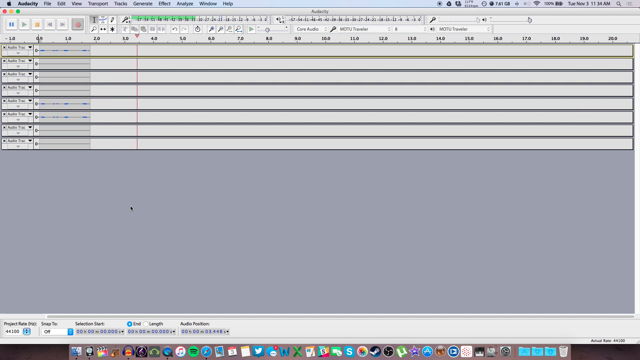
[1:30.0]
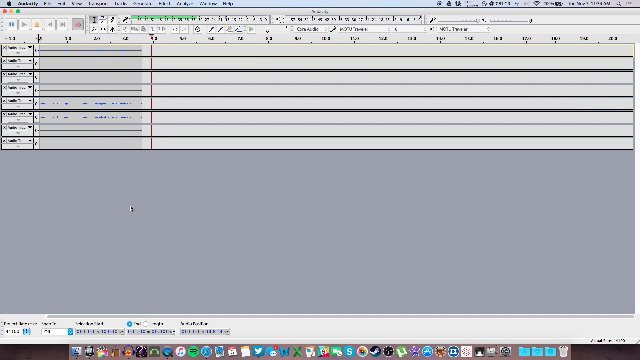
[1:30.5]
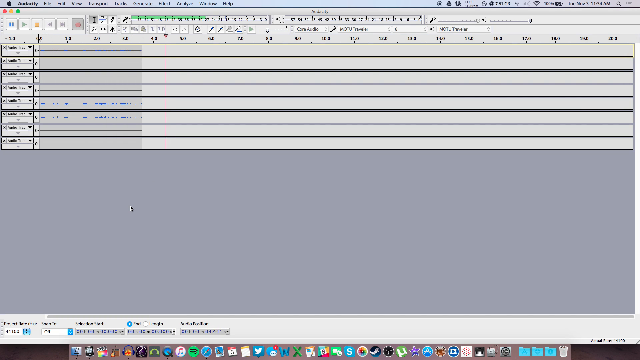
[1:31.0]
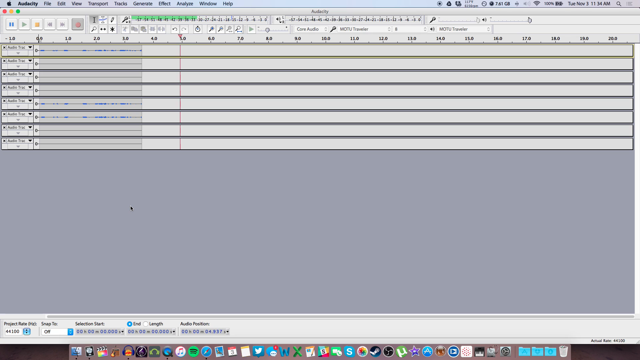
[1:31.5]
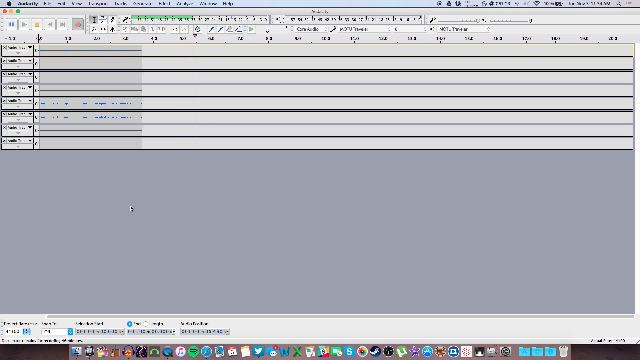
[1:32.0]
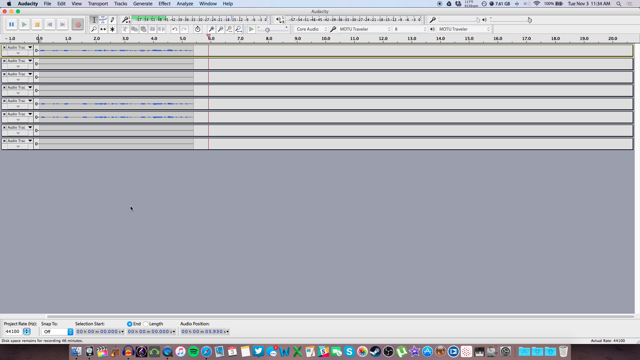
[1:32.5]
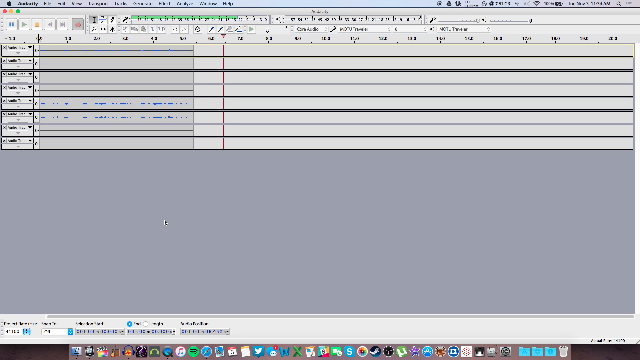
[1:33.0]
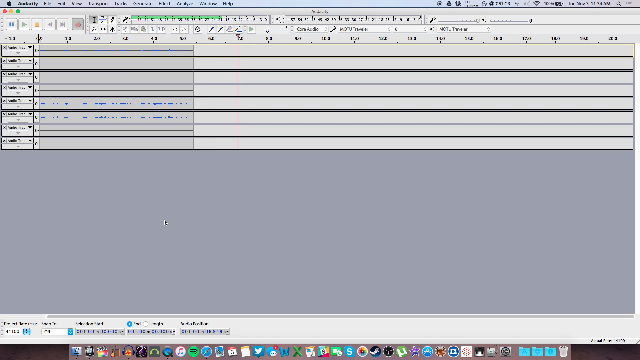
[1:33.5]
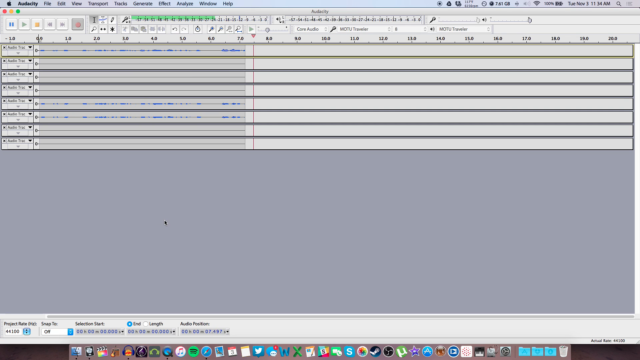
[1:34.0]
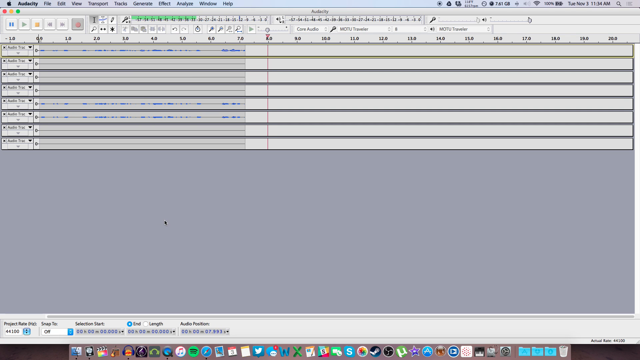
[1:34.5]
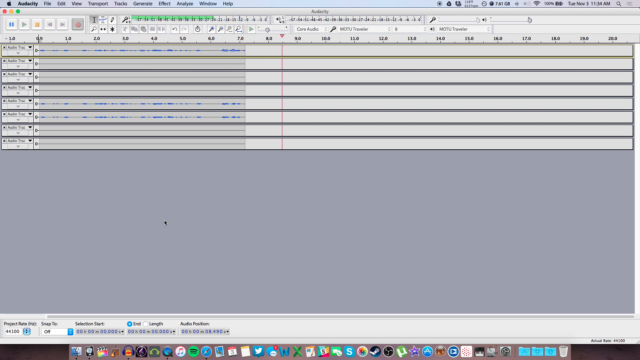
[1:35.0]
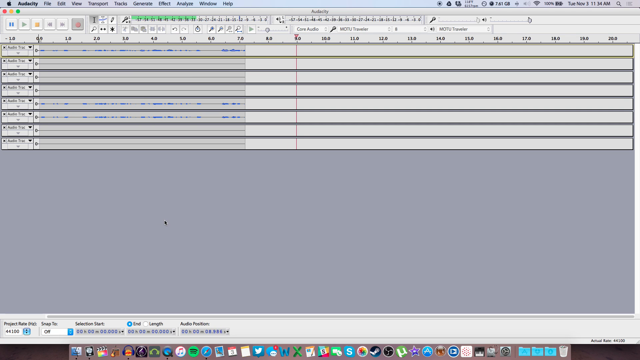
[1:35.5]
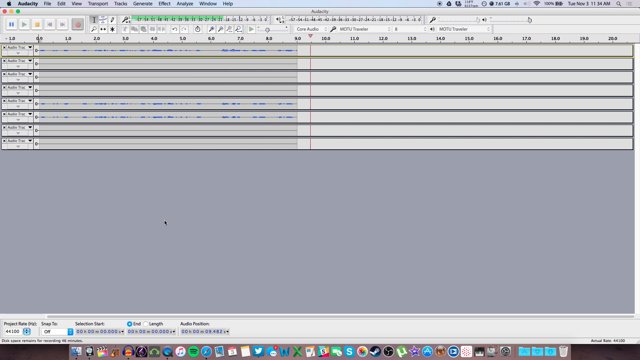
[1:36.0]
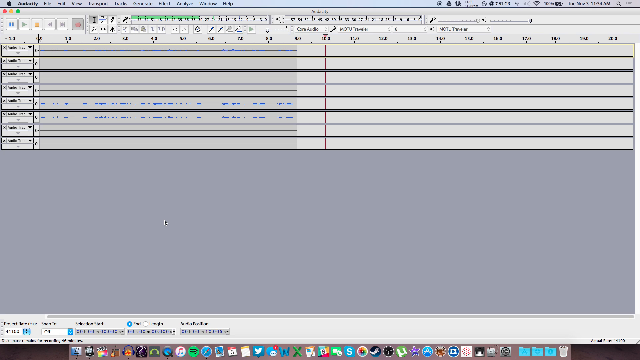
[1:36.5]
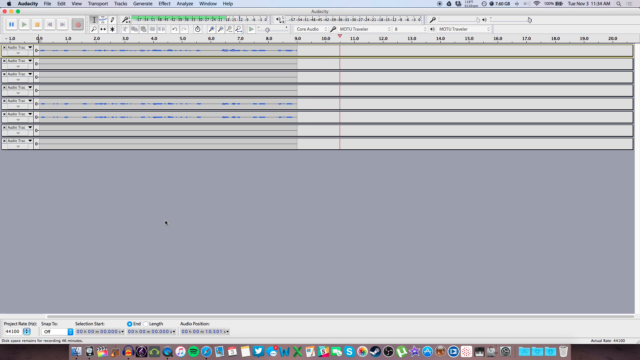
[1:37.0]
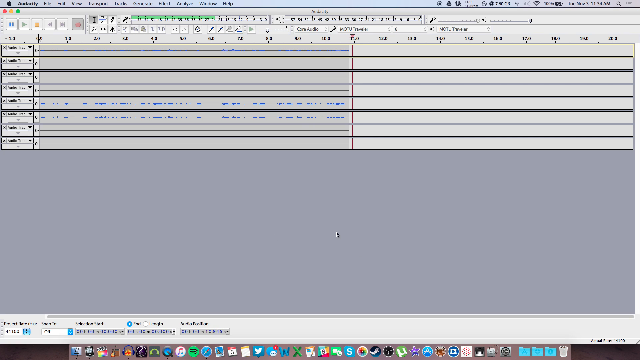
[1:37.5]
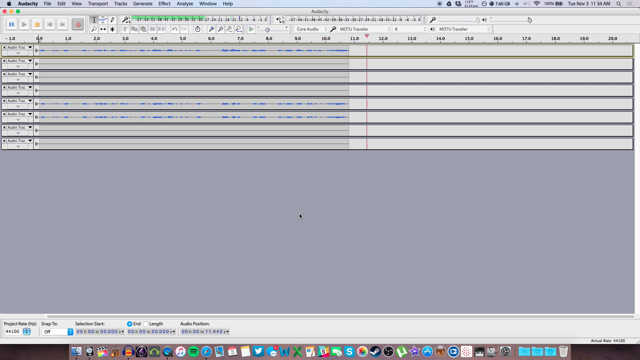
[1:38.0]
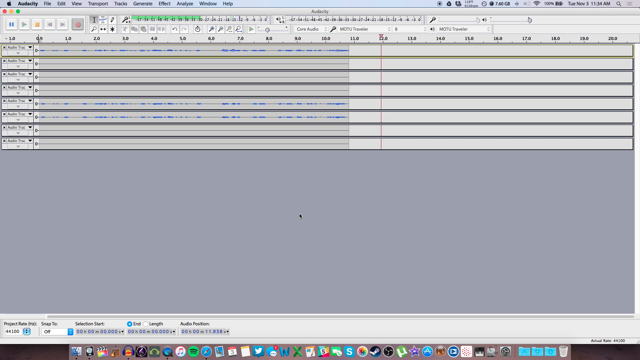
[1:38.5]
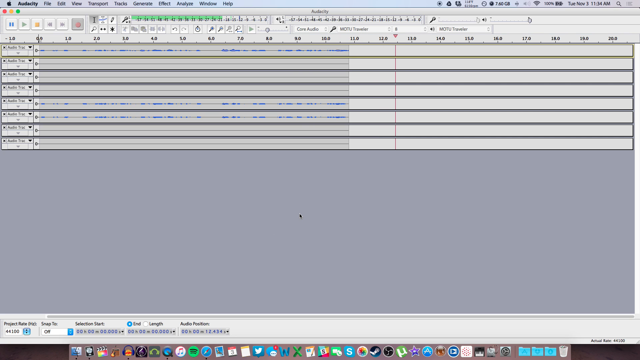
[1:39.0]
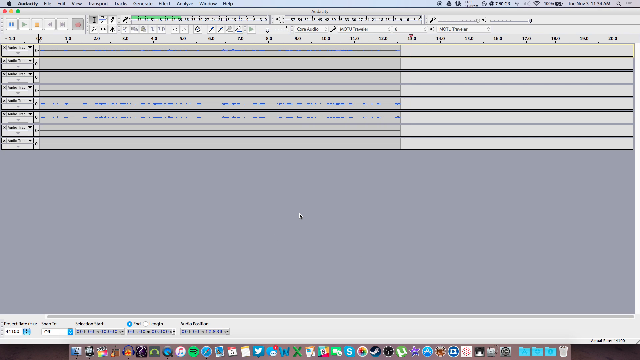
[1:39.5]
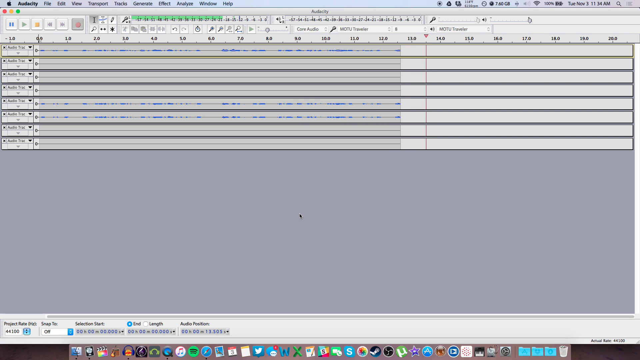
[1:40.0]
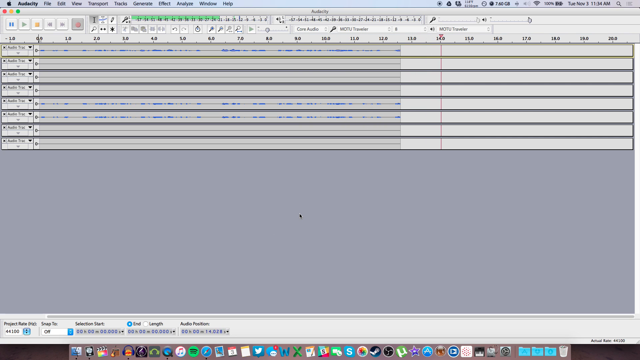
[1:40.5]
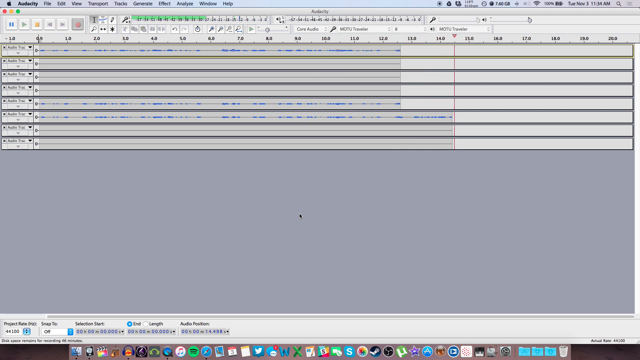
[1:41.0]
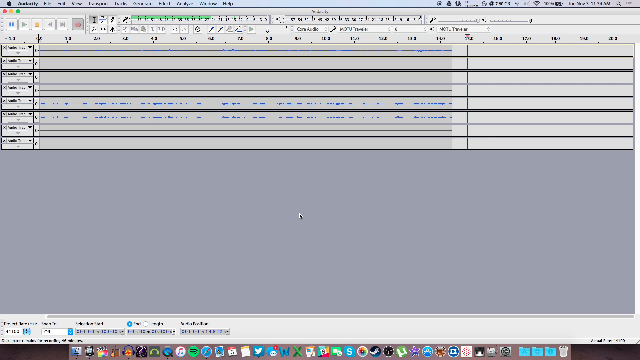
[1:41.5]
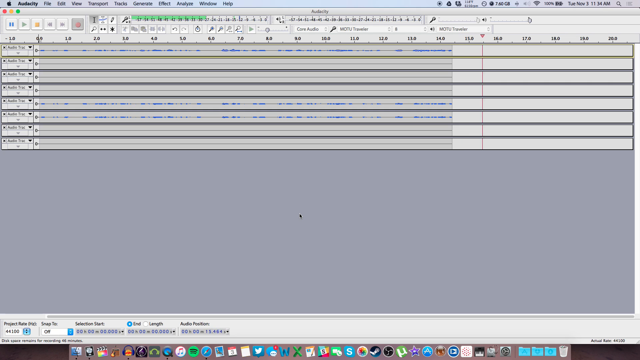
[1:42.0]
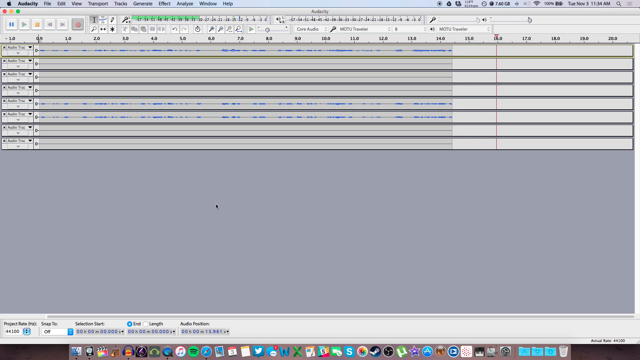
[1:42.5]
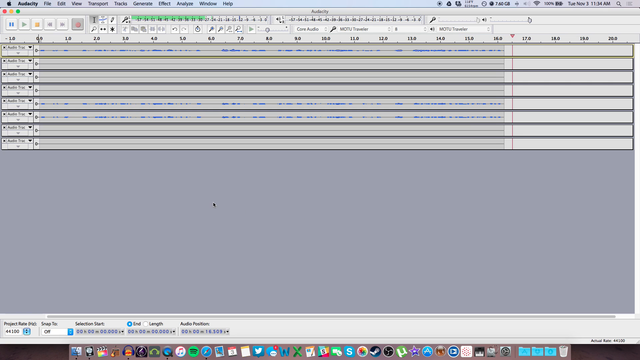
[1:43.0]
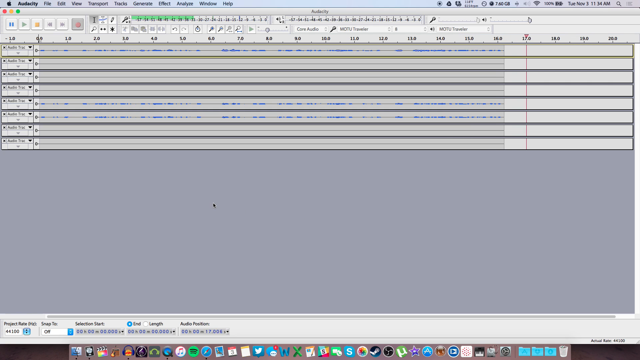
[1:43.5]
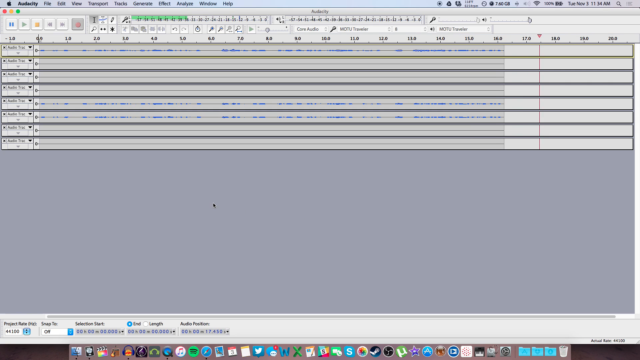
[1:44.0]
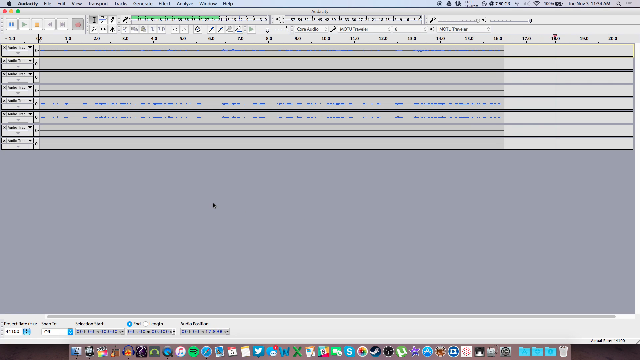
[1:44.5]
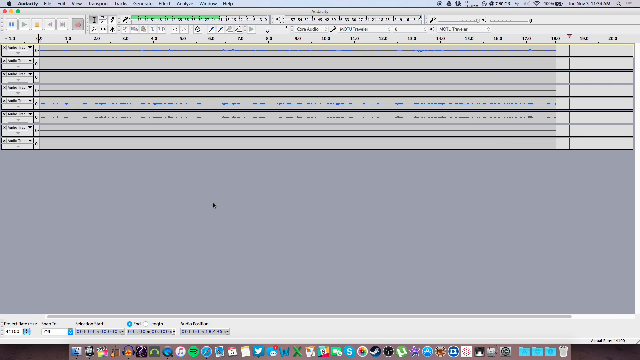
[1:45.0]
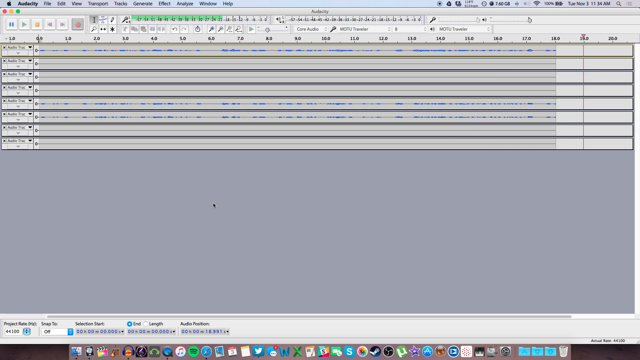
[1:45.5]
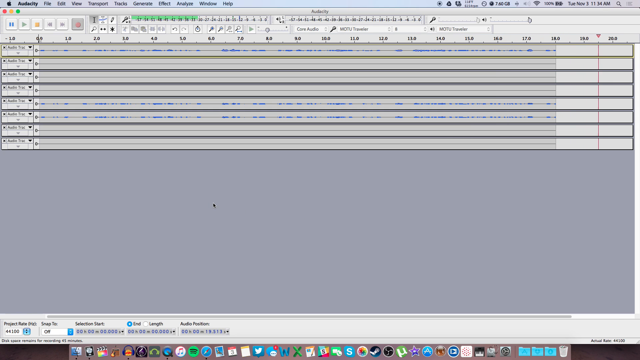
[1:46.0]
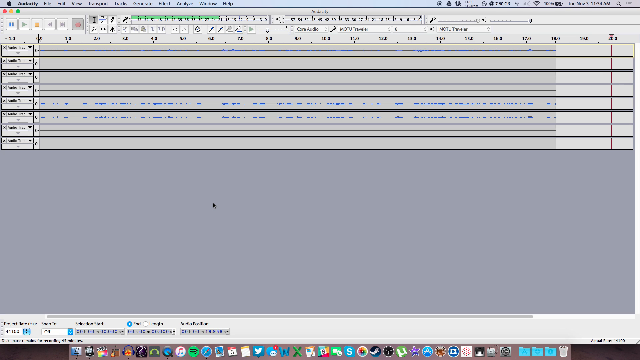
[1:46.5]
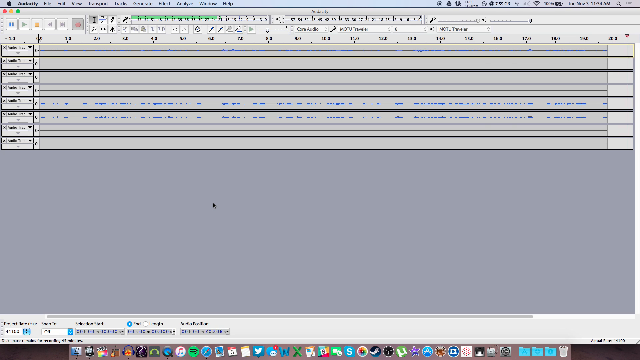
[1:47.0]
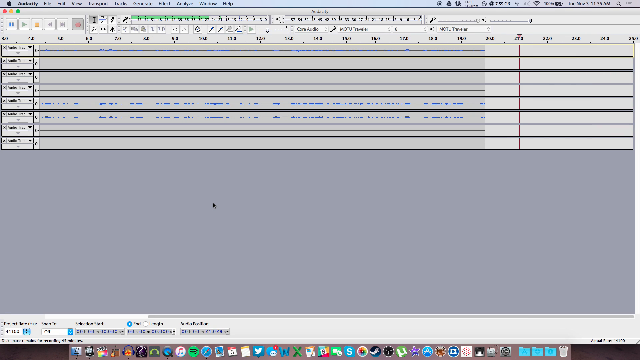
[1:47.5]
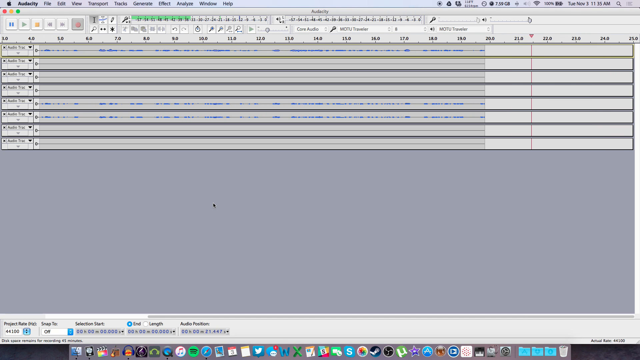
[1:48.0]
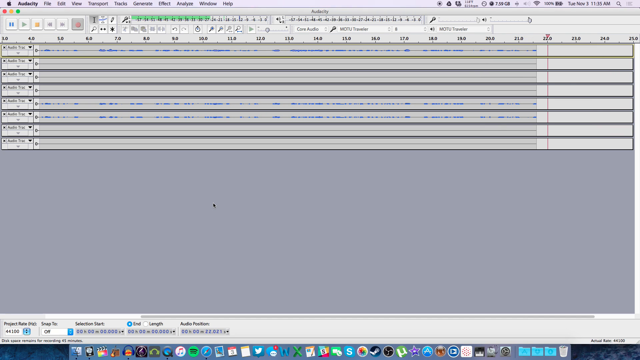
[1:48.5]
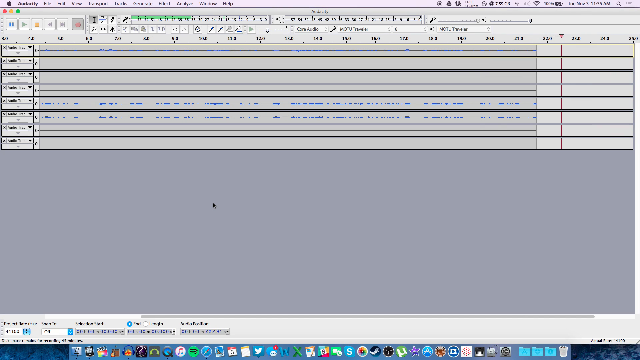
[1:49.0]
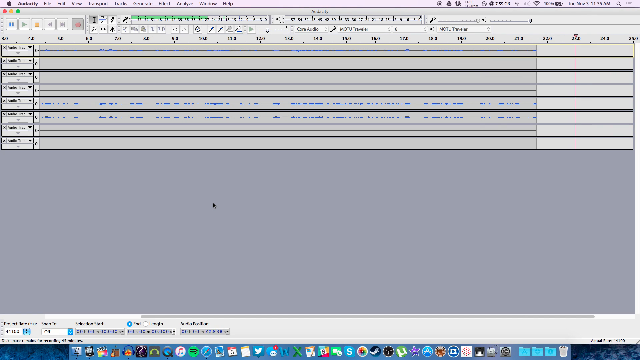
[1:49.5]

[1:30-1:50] There are eight individual boxes with numbers, and it looks like maybe voice recordings are being made, since little lines appear in them. A red line is right around the four, and as it moves, more of the voice recordings seem to fill in. At the top there is a picture of a microphone with a green bar that keeps moving to various levels. The timer is already up to almost what looks like 20 seconds, and the numbers keep going. Everything other than the eight recordings is completely gray underneath. The red record button apparently has been pressed, since it looks kind of grayed out compared to the other buttons. Among the eight recordings, some of the lines are blue, and some appear to have nothing there.